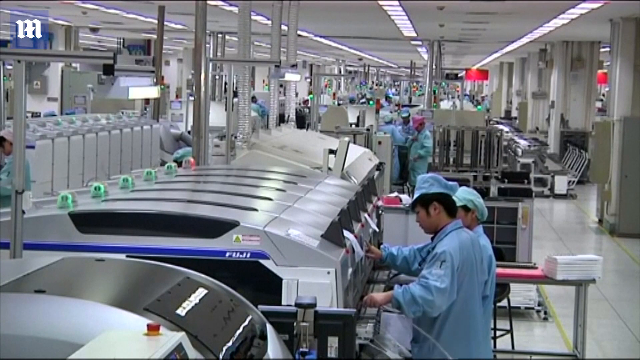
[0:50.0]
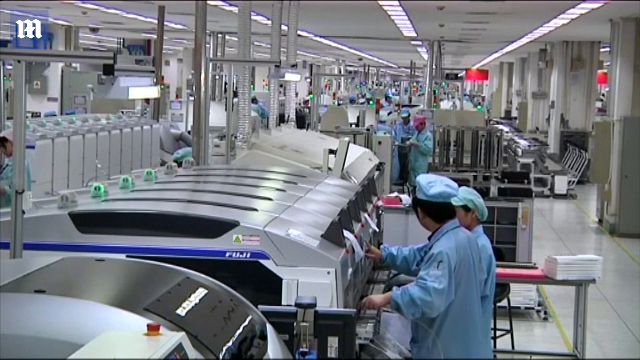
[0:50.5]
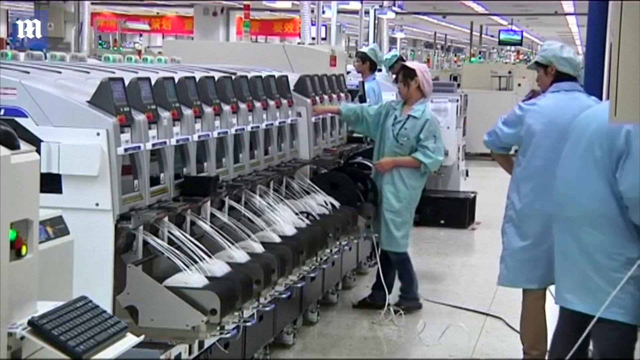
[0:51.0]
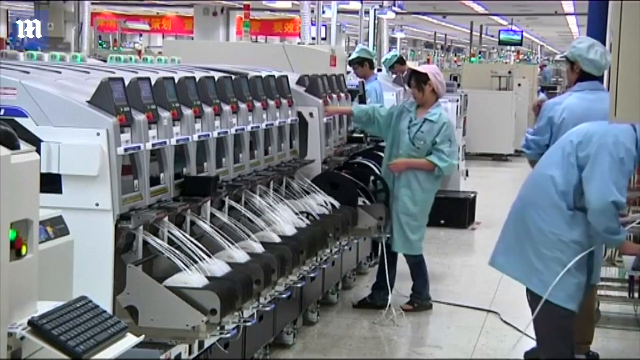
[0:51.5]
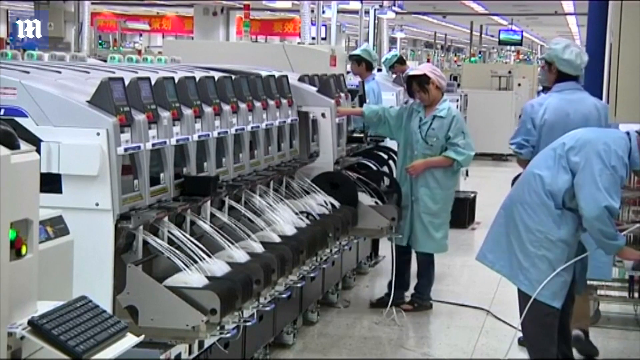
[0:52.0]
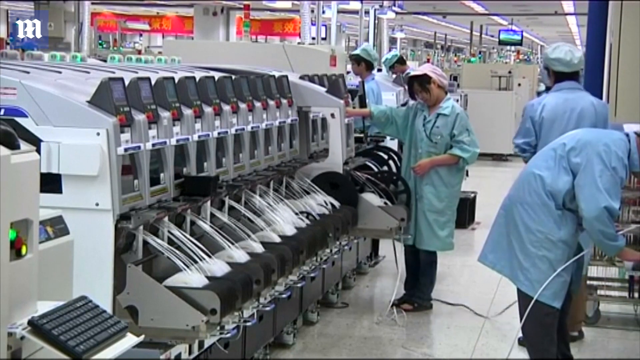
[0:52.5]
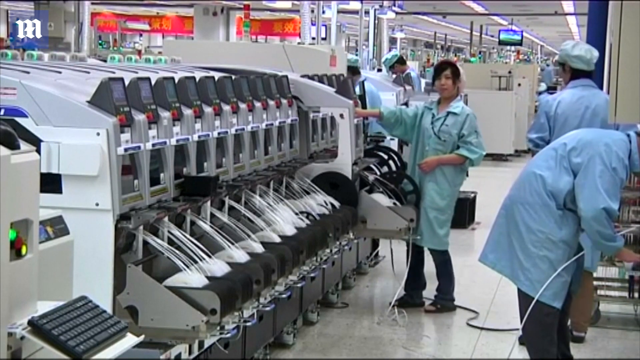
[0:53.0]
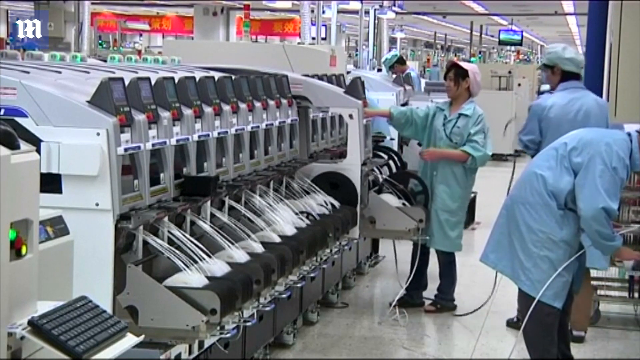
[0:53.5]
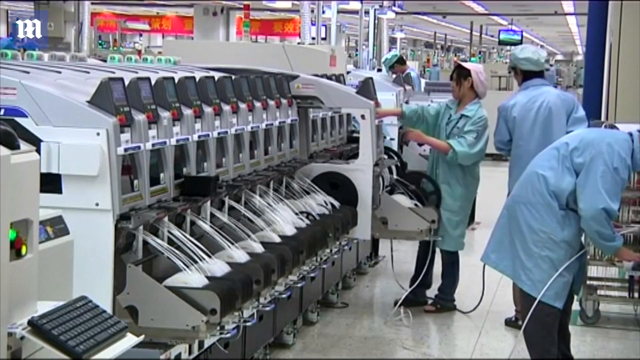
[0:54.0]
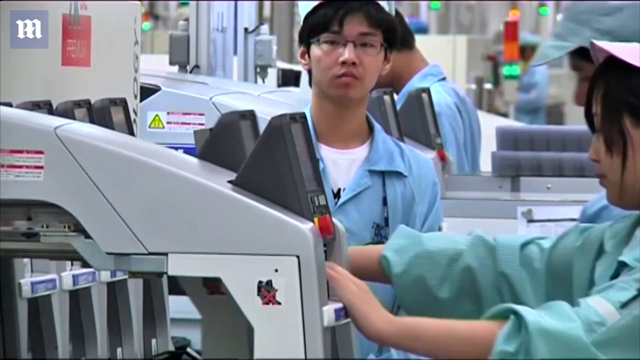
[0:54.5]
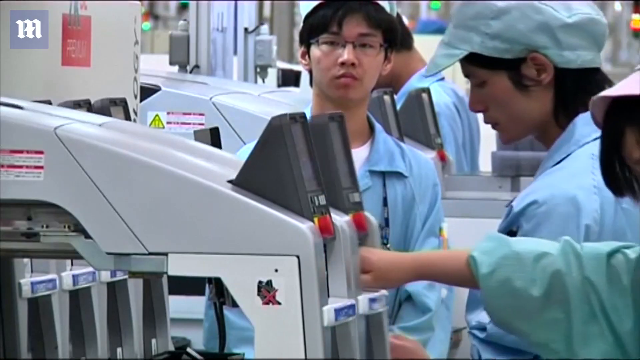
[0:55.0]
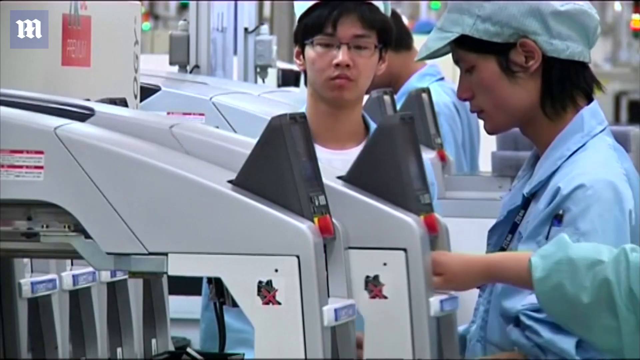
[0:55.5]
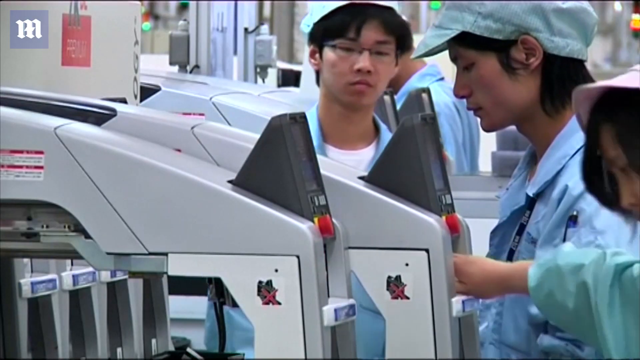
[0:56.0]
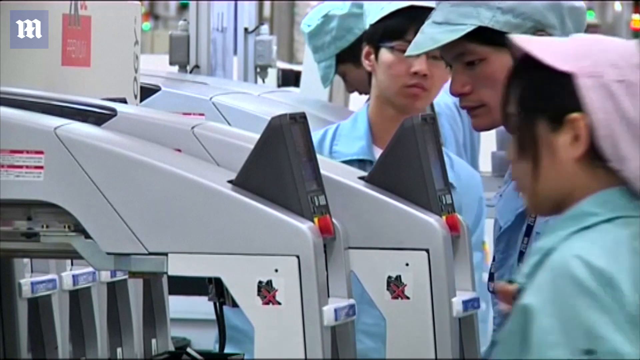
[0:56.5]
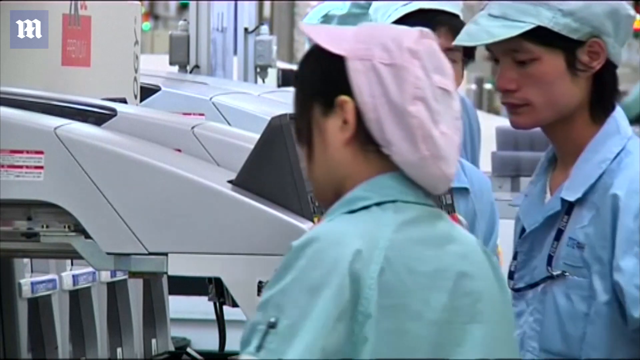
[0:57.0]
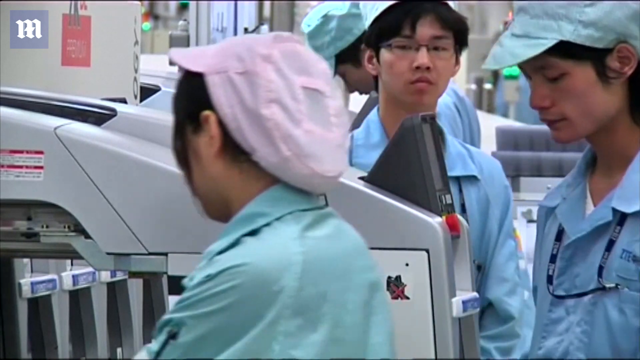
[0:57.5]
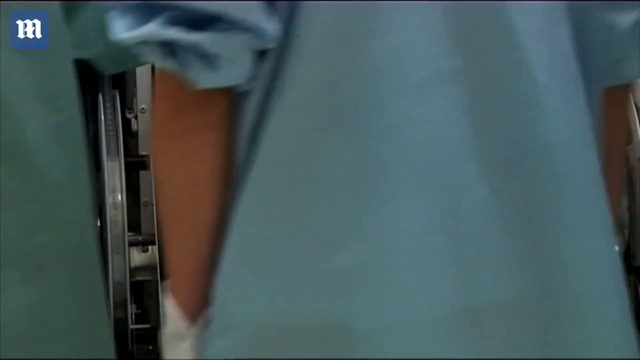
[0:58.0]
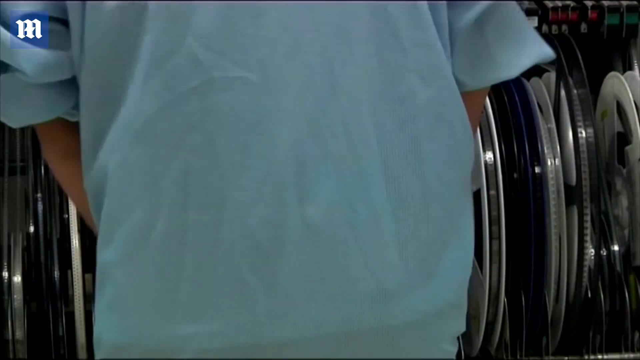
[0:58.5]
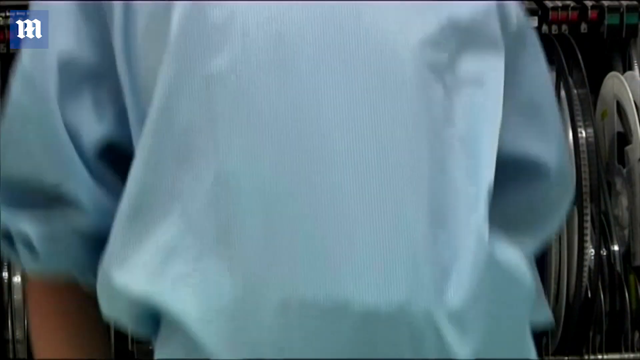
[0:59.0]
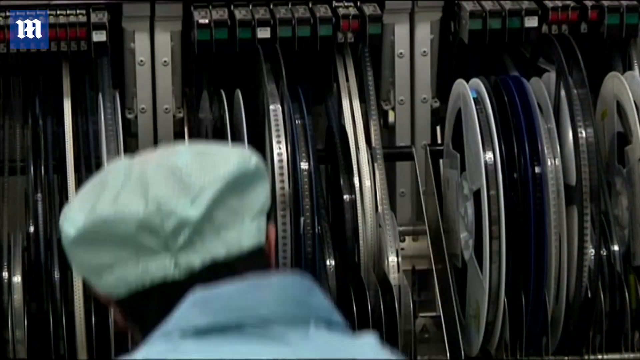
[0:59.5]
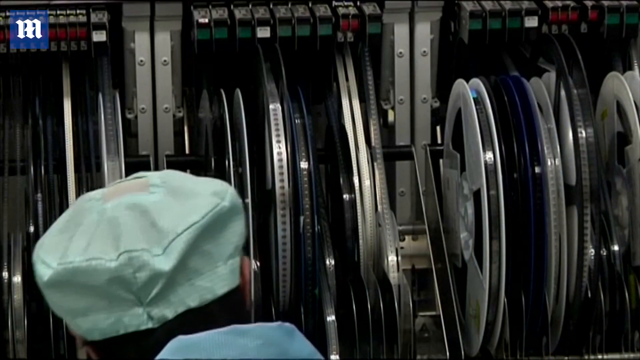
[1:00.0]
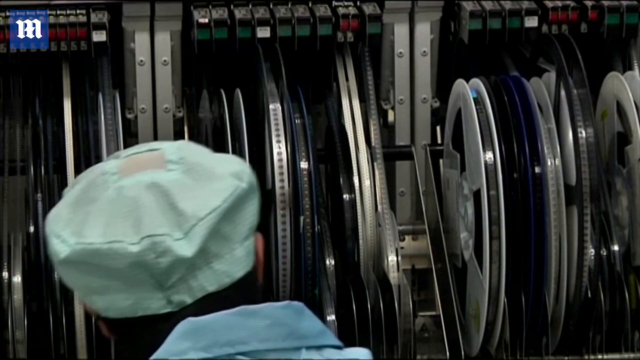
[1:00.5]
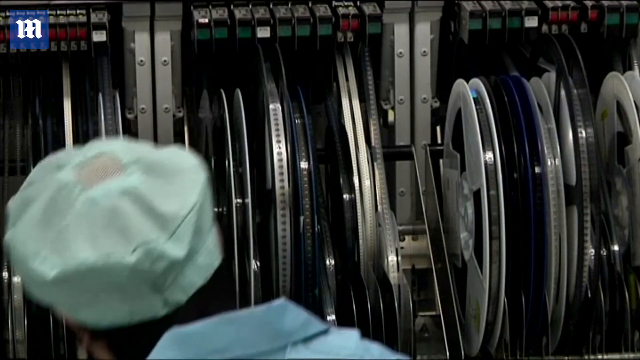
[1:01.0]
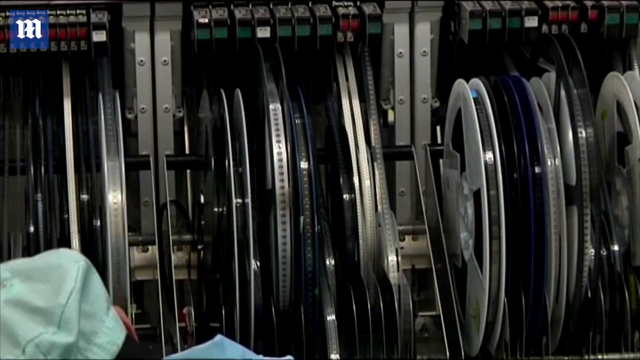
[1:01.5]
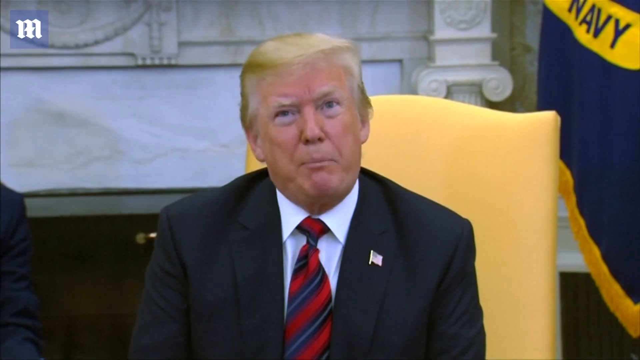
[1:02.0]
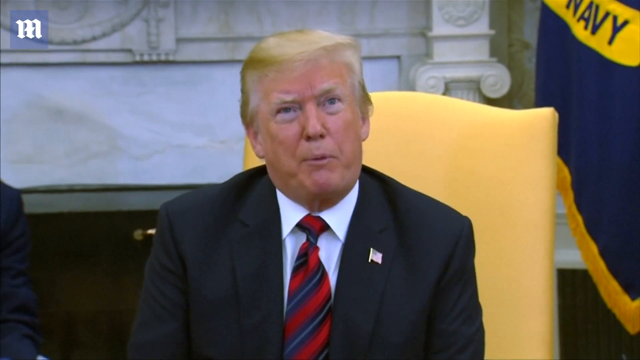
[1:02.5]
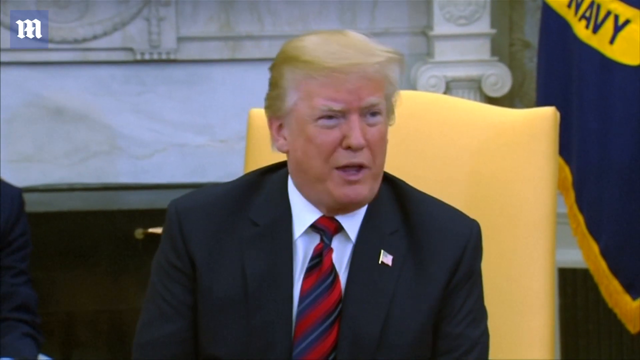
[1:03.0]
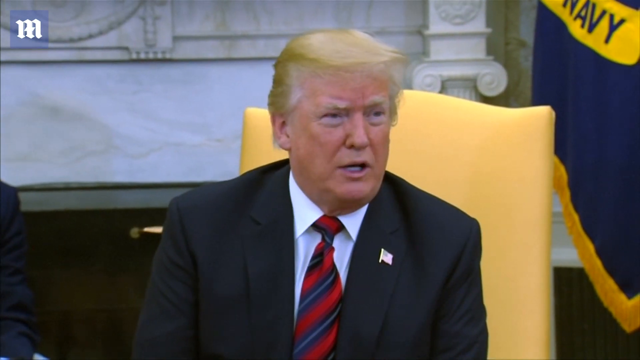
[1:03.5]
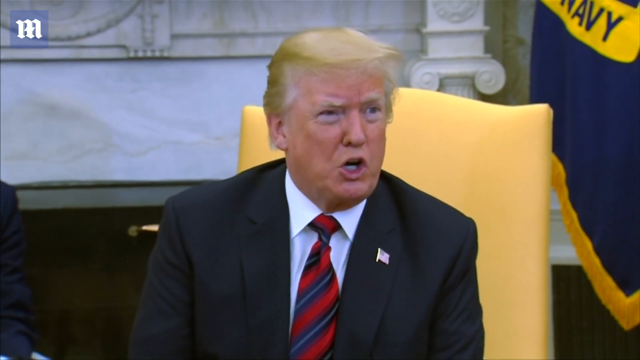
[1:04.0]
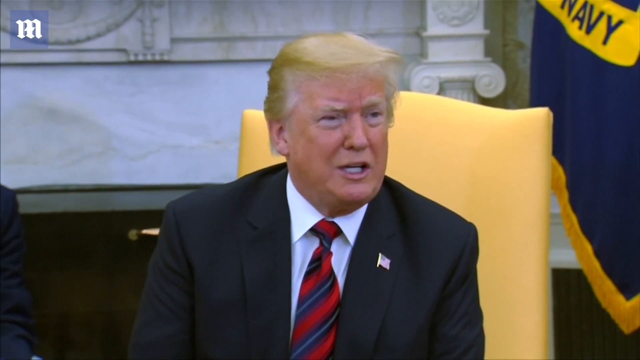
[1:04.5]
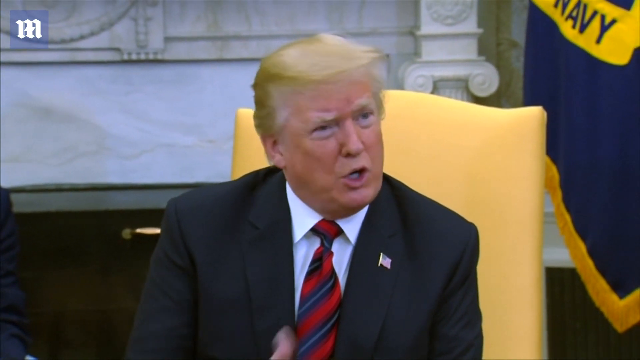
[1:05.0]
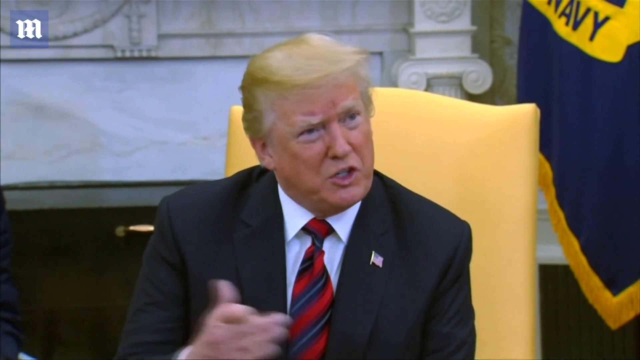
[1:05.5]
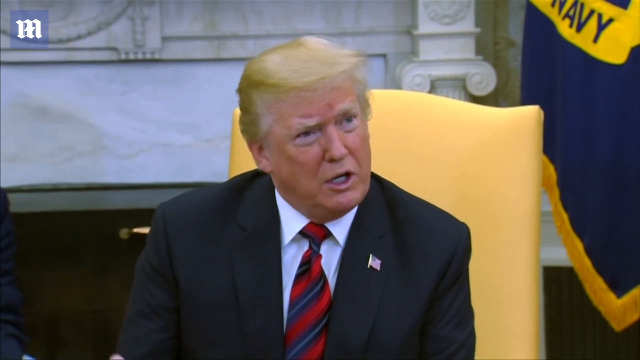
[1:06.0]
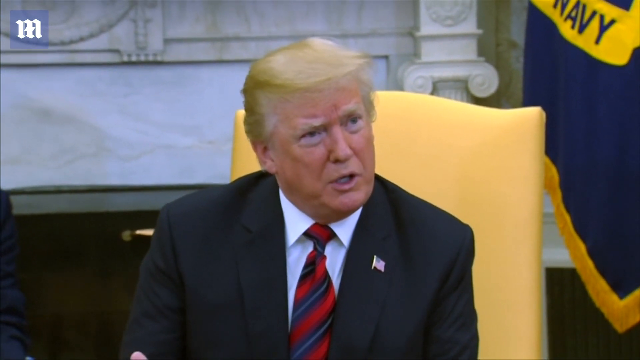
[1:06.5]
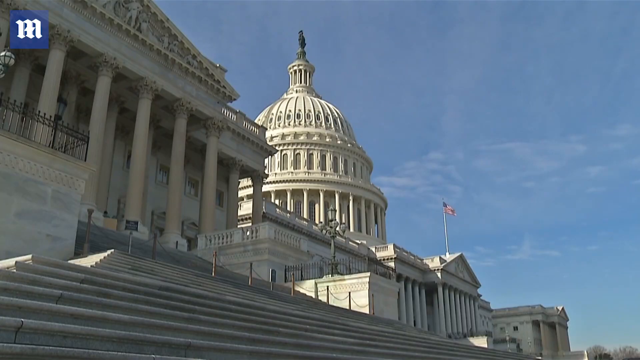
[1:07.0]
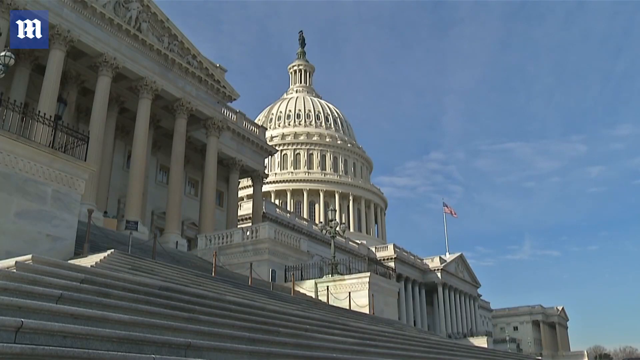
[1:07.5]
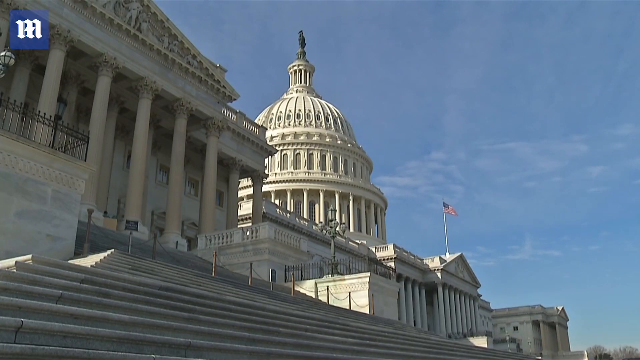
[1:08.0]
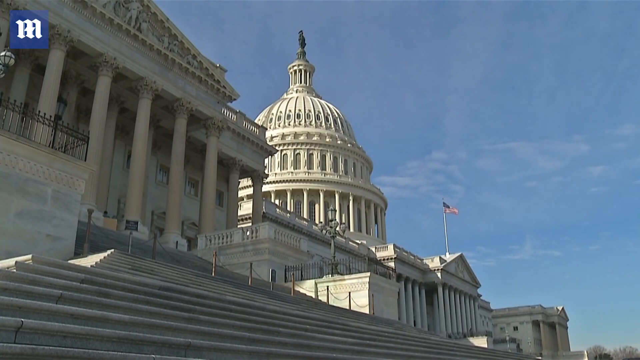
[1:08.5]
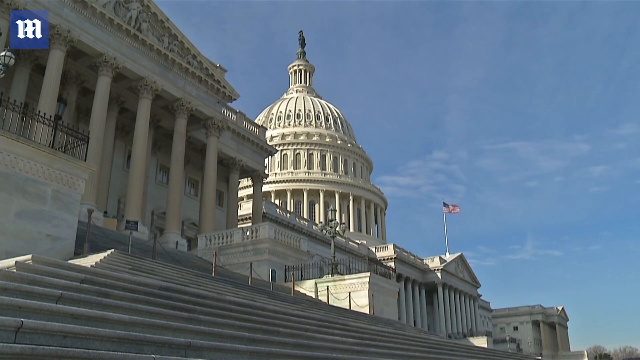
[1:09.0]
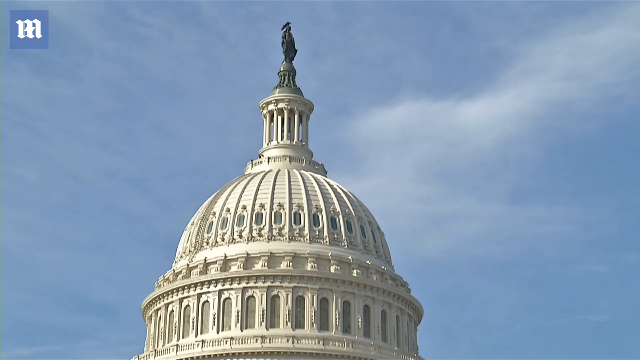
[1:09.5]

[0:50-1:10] Donald Trump is on the screen, addressing the others in the meeting.